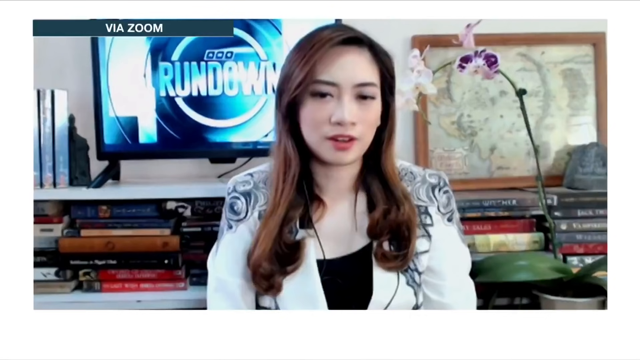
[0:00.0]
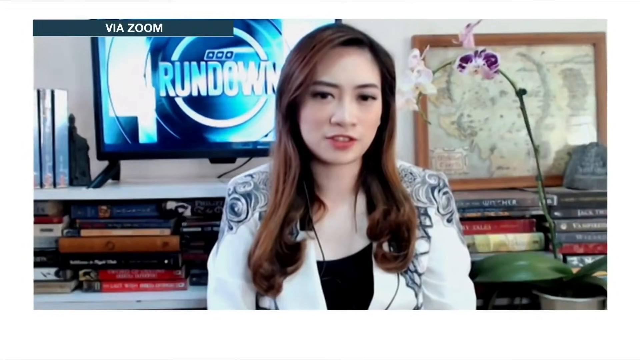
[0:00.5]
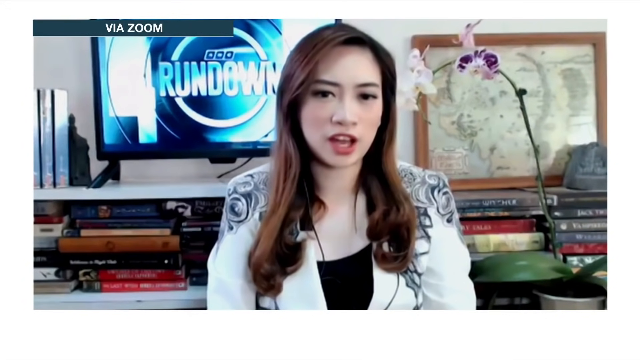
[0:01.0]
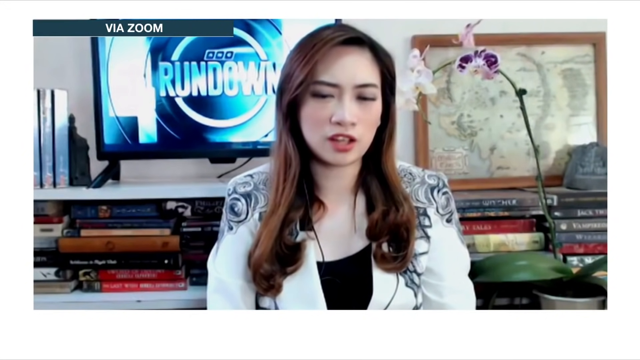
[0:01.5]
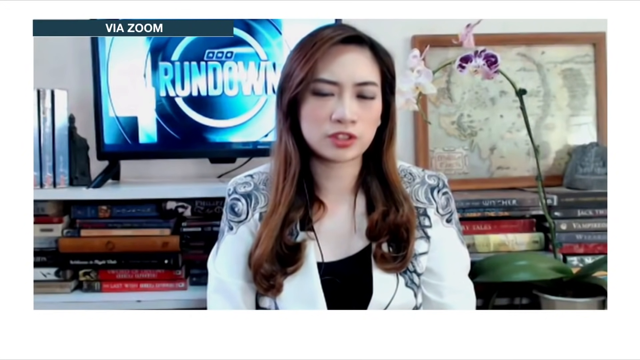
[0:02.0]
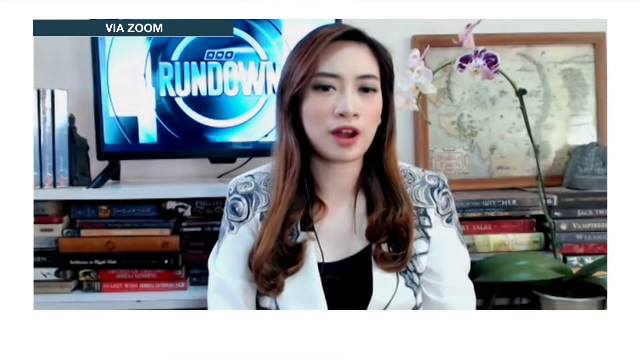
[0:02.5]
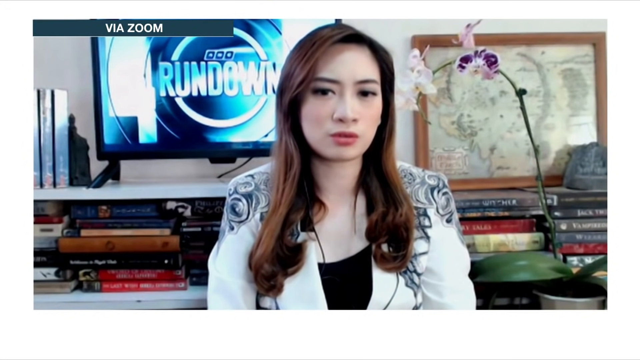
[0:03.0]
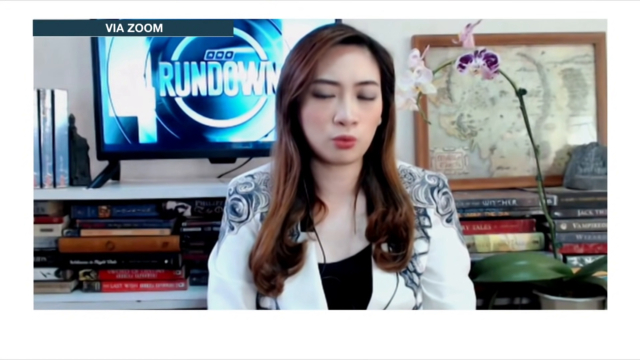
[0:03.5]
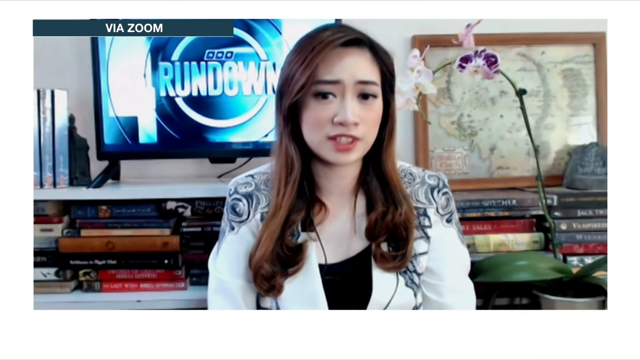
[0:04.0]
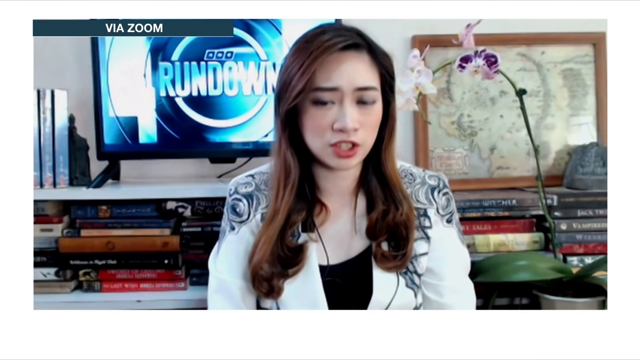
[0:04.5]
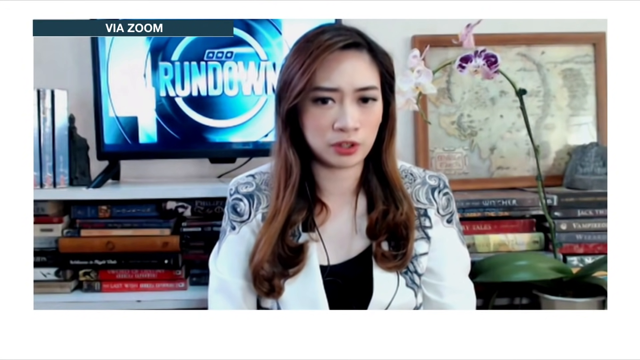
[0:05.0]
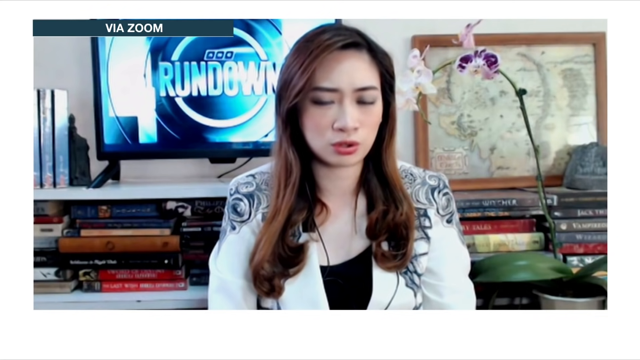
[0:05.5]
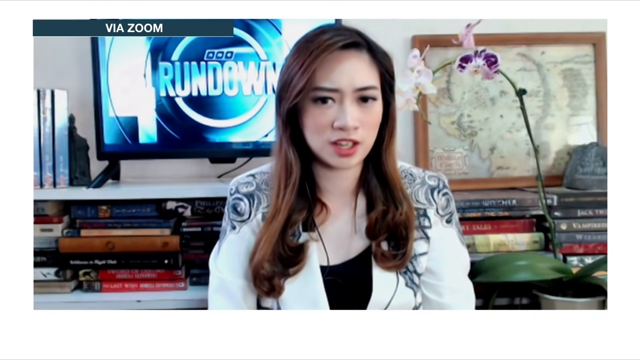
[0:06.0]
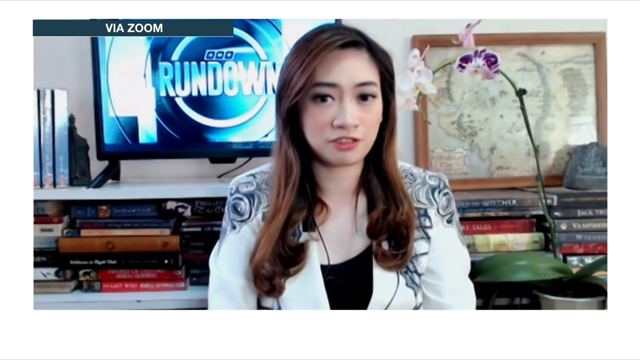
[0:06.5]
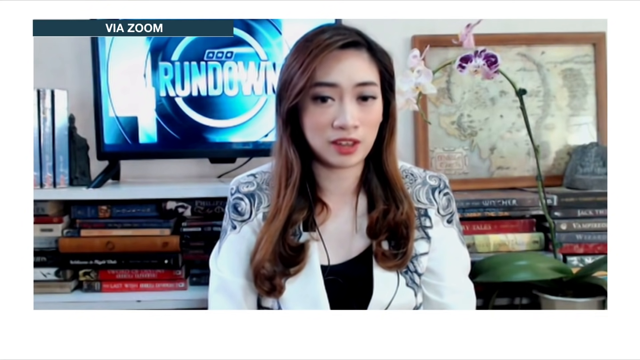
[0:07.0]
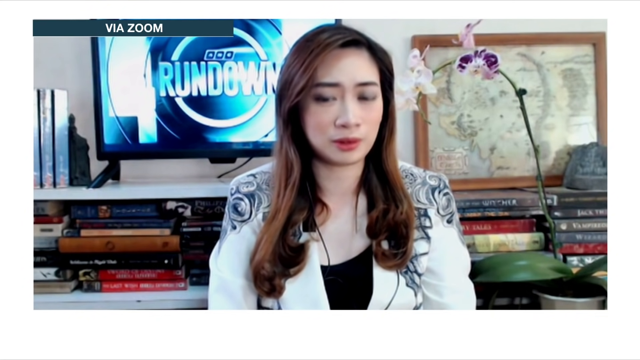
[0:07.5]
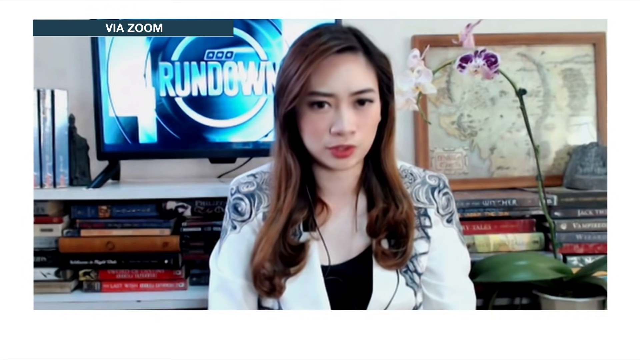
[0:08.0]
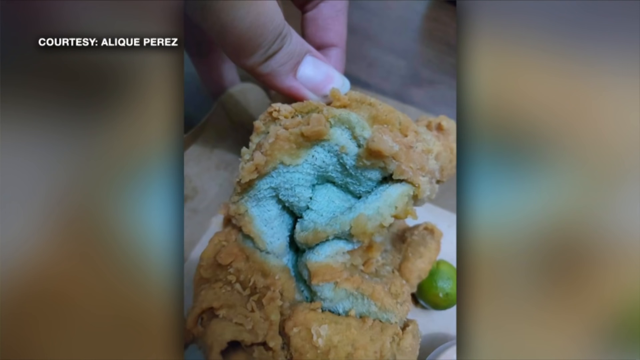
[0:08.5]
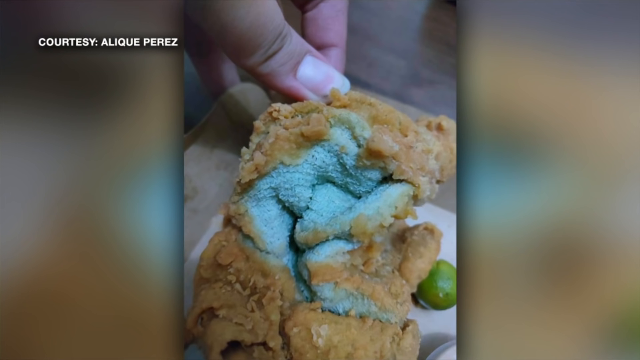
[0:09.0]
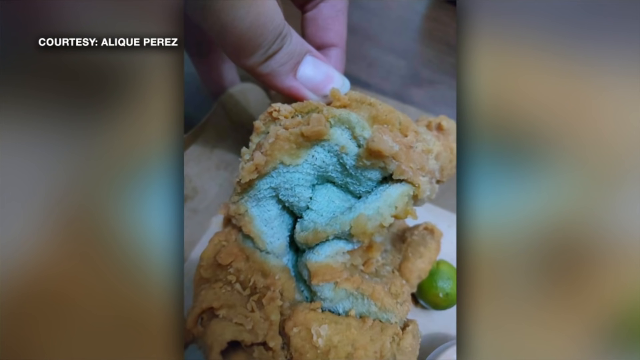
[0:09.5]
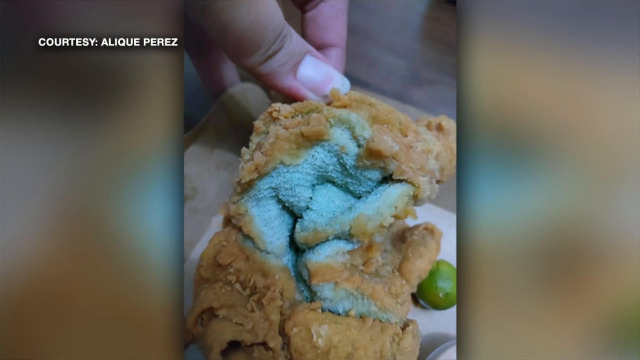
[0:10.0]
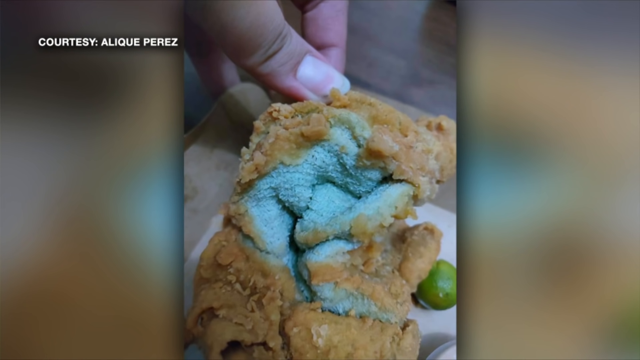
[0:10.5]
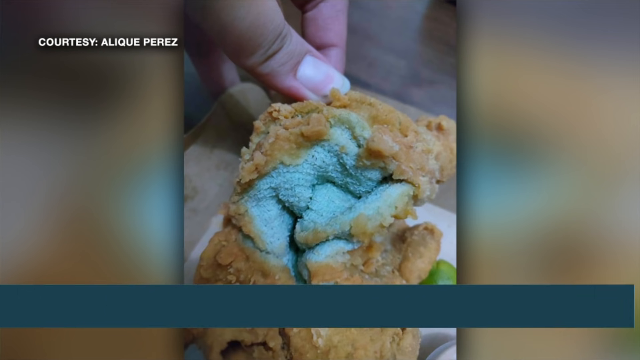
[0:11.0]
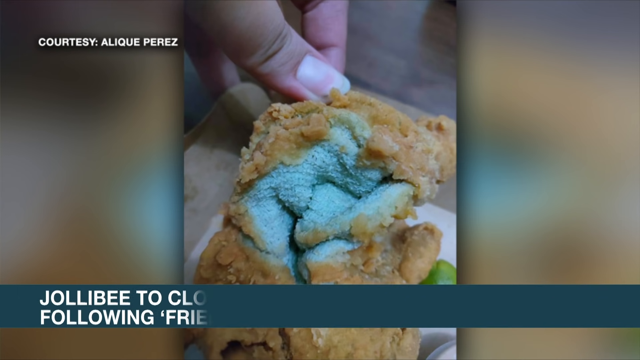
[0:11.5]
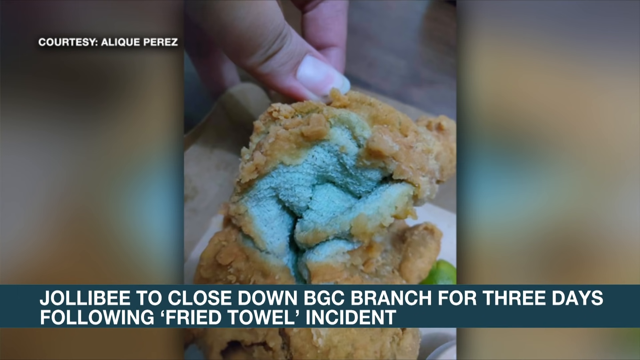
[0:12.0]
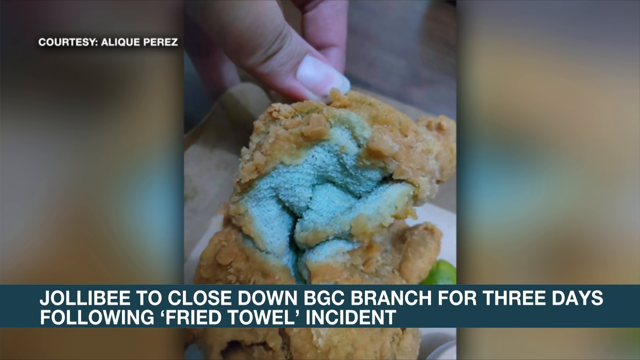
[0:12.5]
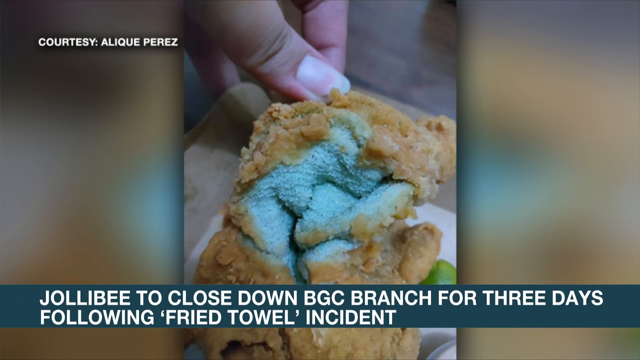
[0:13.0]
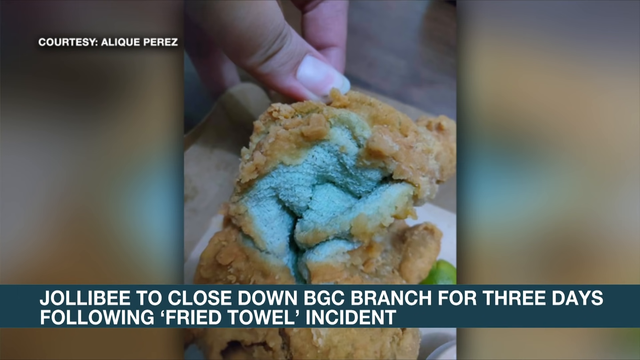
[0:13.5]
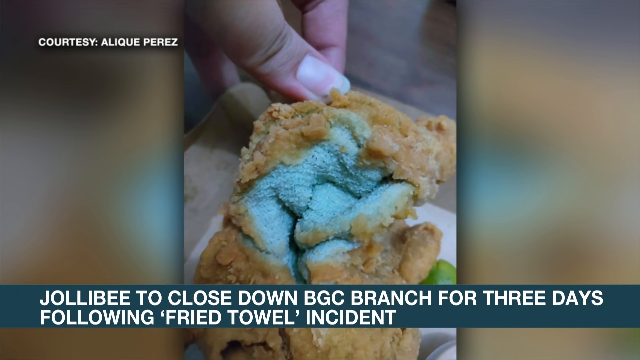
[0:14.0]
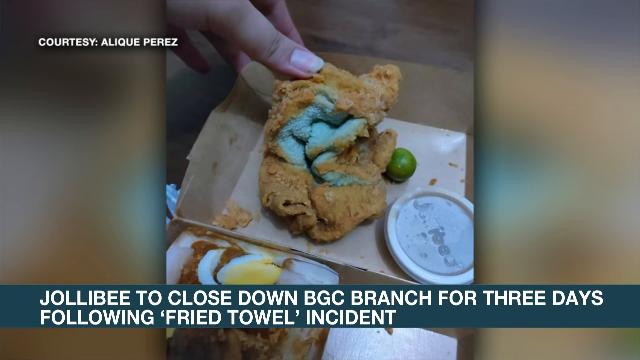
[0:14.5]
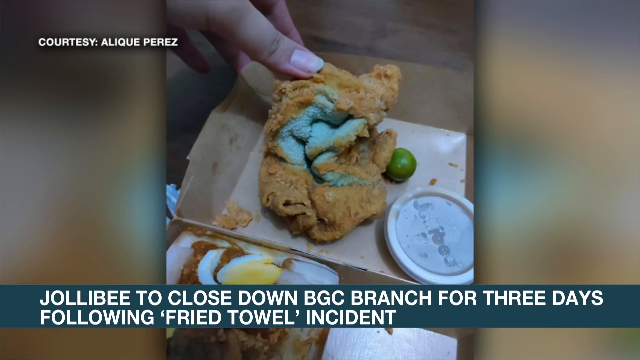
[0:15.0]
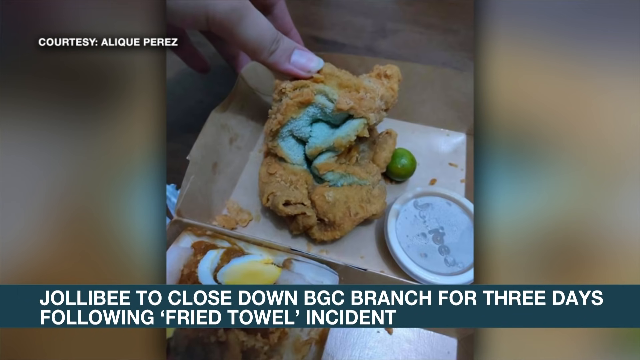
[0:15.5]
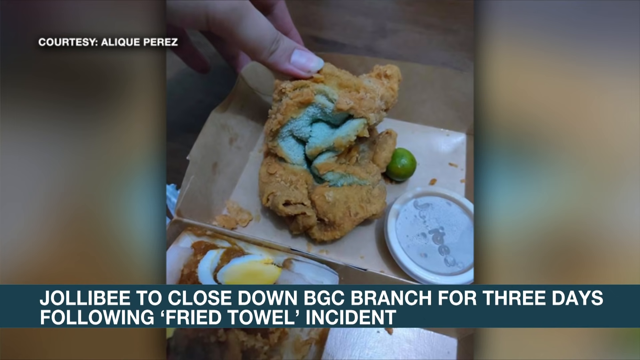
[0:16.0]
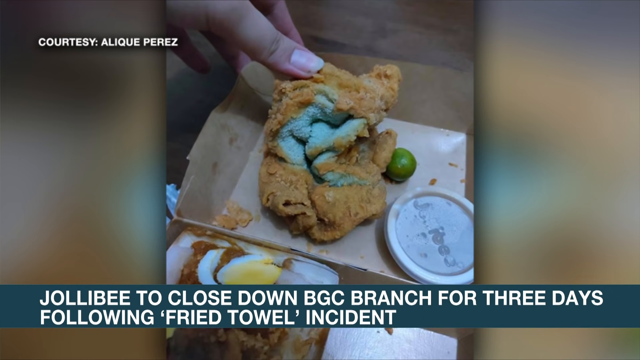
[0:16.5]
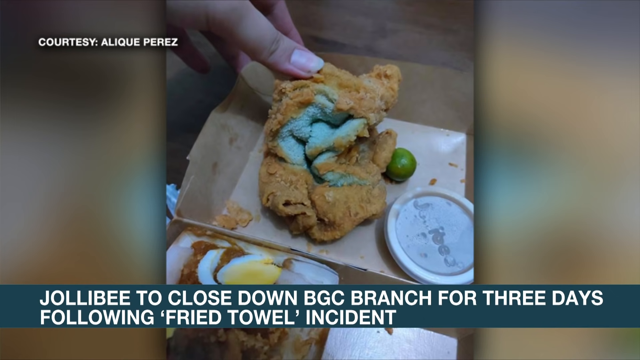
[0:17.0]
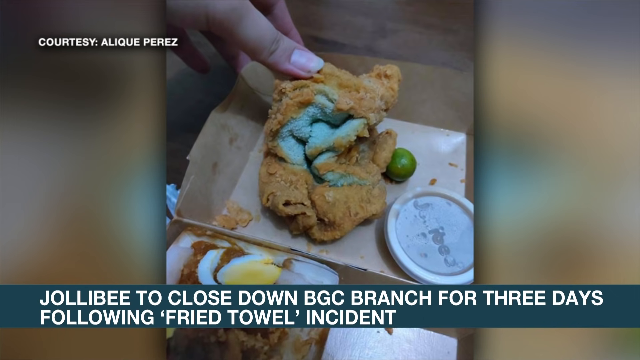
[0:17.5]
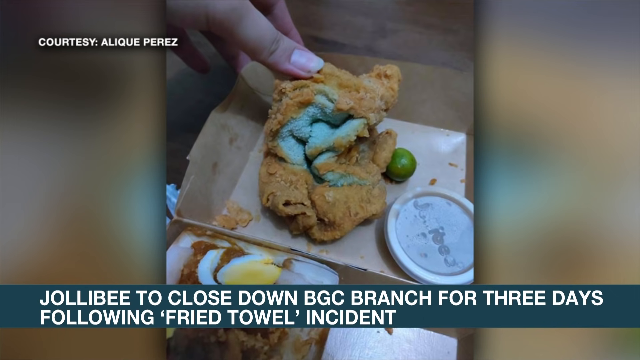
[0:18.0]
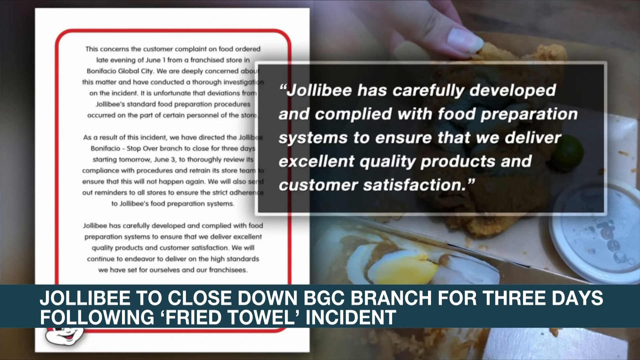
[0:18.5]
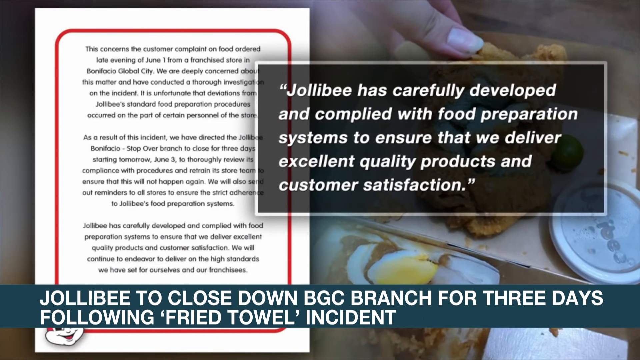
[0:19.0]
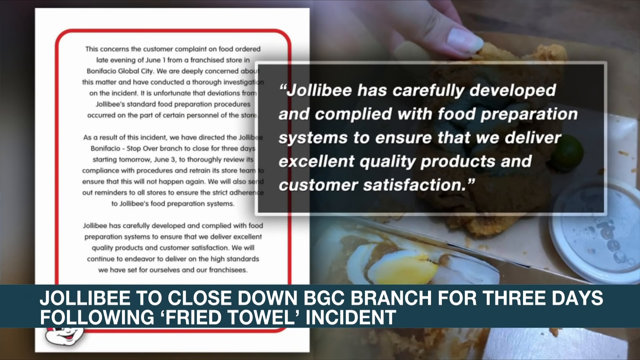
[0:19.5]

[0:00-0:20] The video opens with footage that appears to be from a news feed. In the upper left-hand corner of the screen, text reads "Via Zoom." In the middle of the screen is a young Asian woman with long brown hair, wearing a white blazer with black floral patterning over a black blouse, and red lipstick. Over her shoulder is a TV monitor with the word "RUNDOWN" in the center of its screen. DVDs and books appear to be stacked on the shelves behind her, and a purple orchid is visible in front of a map in the background. She looks directly into the camera and speaks for several seconds. The camera then cuts to an image with "Courtesy Alik Perez" in the upper left-hand corner; in the middle of the image, a person's hand appears to be holding a piece of food. Several seconds later, words appear at the bottom of the screen: "Jollibee to close down BGC branch for three days following fried towel incident." The segment ends by showing an excerpt from an article, with the quotes set in quotation marks.